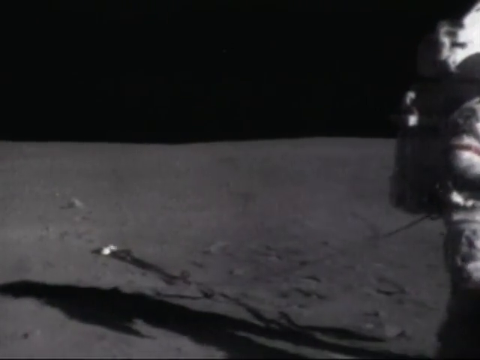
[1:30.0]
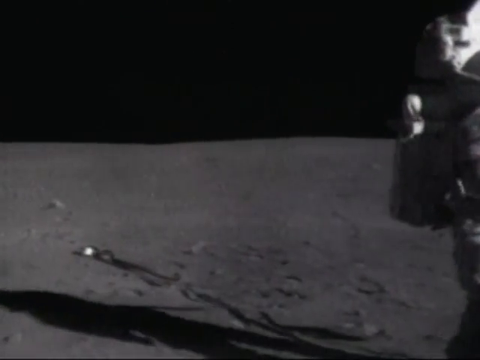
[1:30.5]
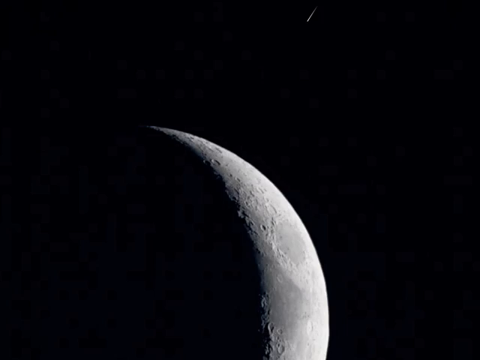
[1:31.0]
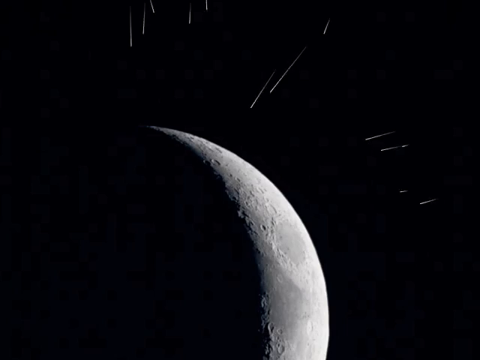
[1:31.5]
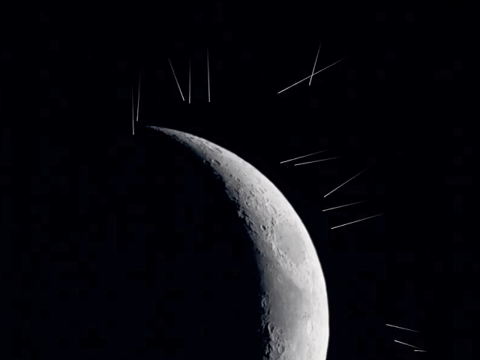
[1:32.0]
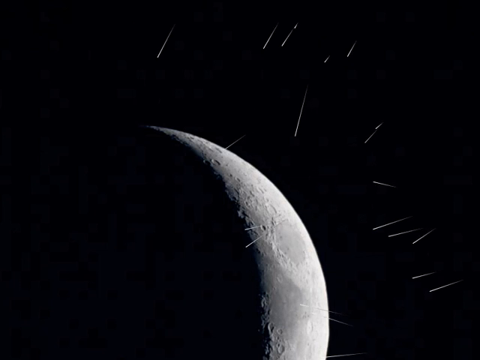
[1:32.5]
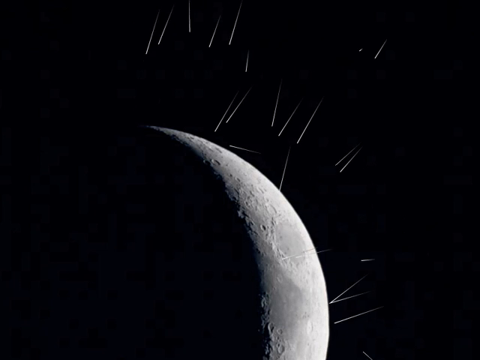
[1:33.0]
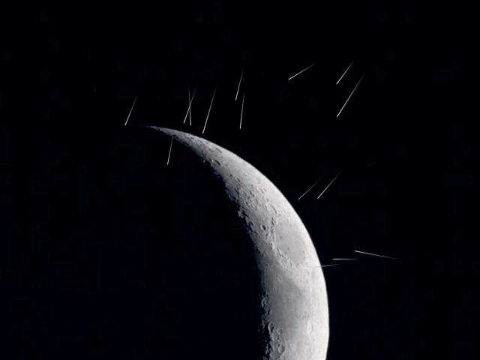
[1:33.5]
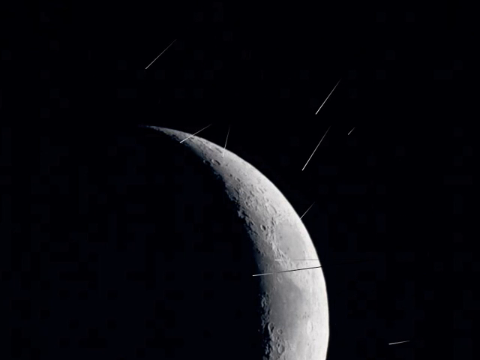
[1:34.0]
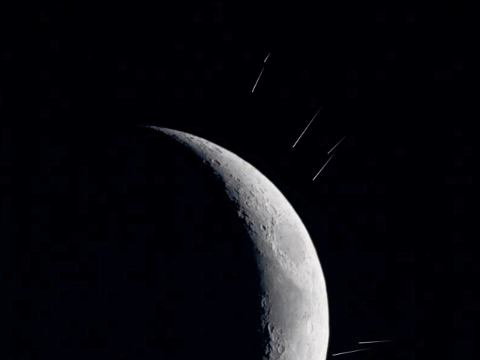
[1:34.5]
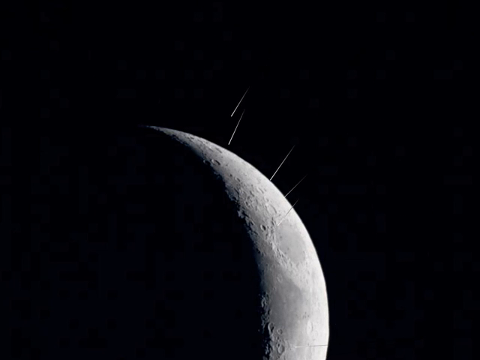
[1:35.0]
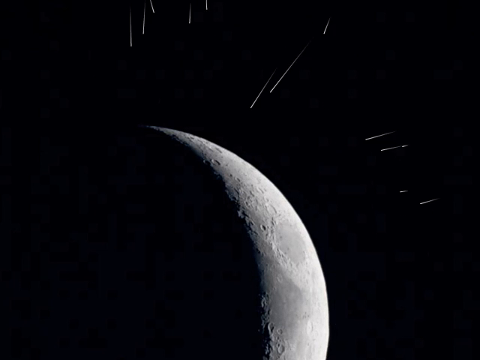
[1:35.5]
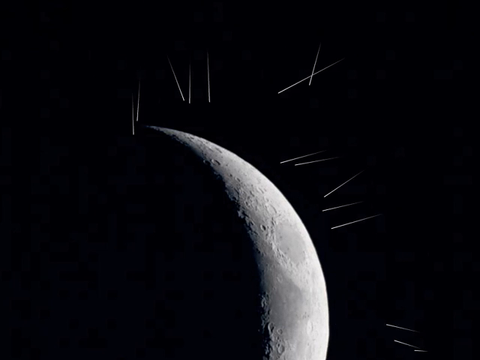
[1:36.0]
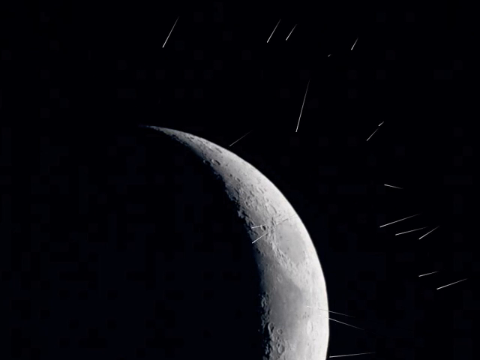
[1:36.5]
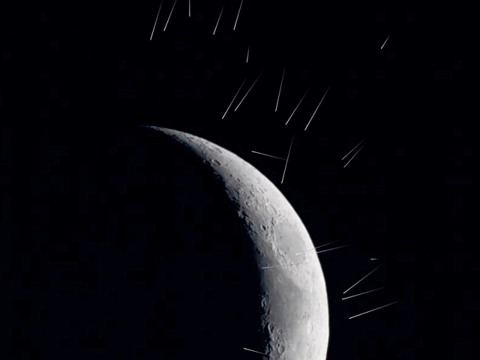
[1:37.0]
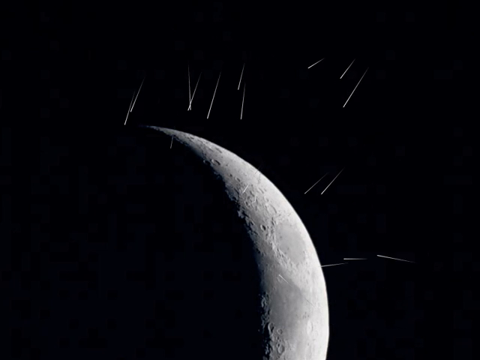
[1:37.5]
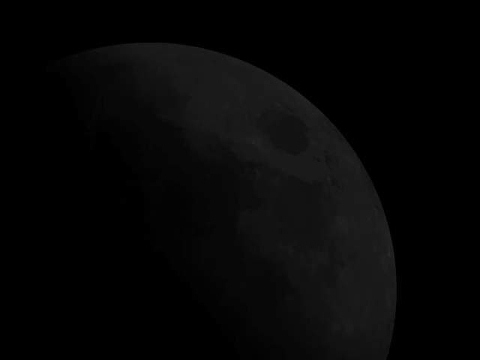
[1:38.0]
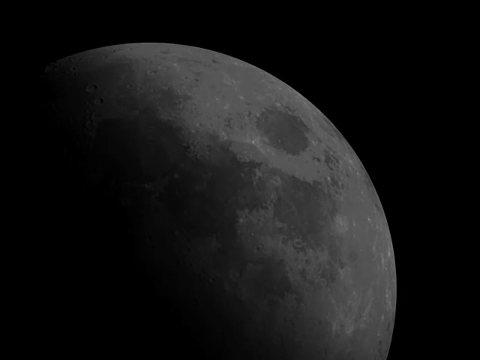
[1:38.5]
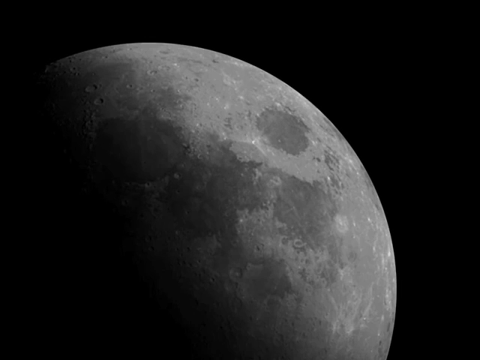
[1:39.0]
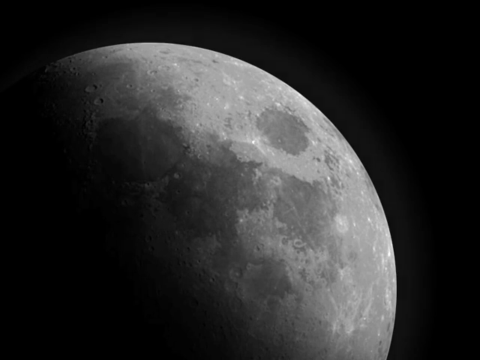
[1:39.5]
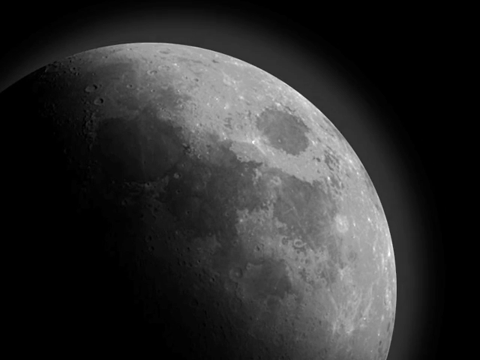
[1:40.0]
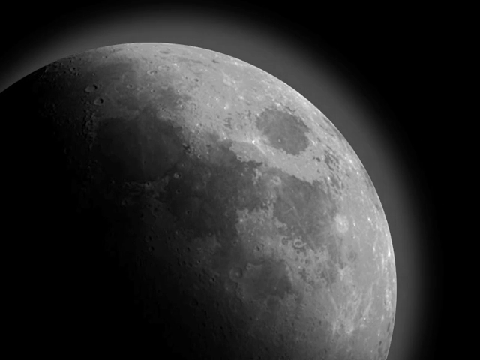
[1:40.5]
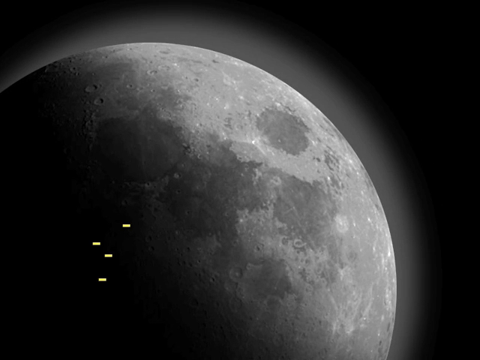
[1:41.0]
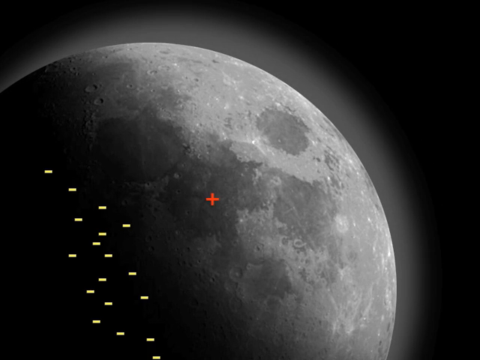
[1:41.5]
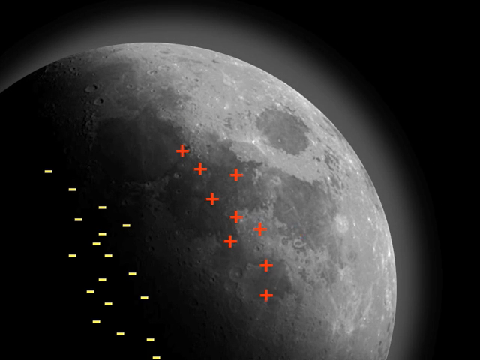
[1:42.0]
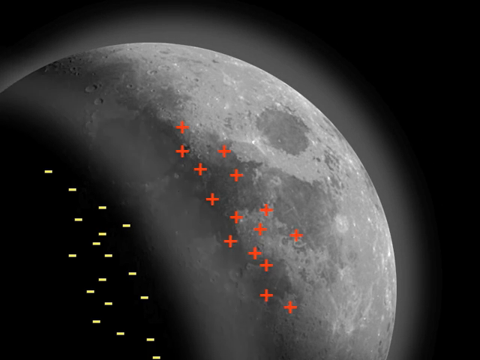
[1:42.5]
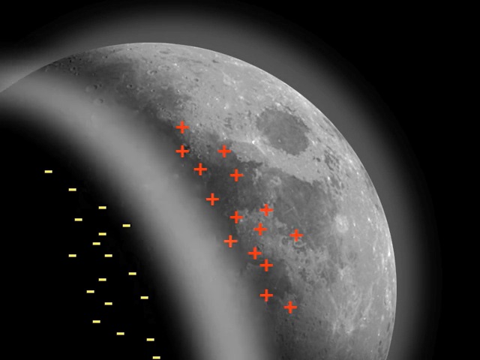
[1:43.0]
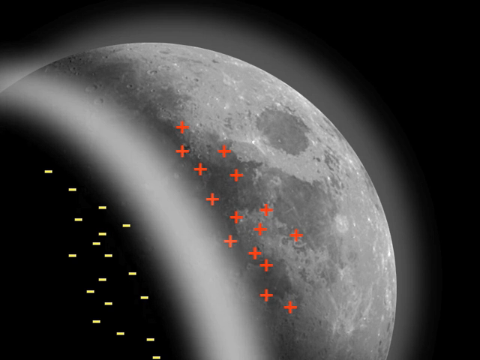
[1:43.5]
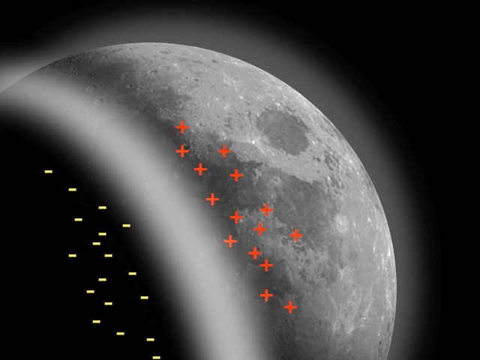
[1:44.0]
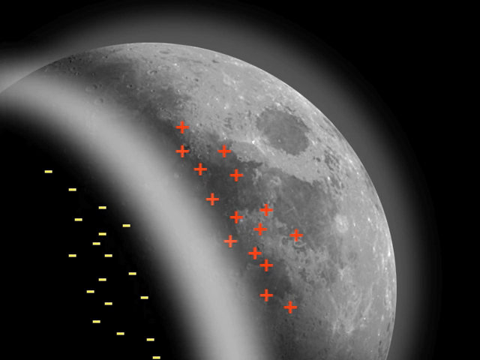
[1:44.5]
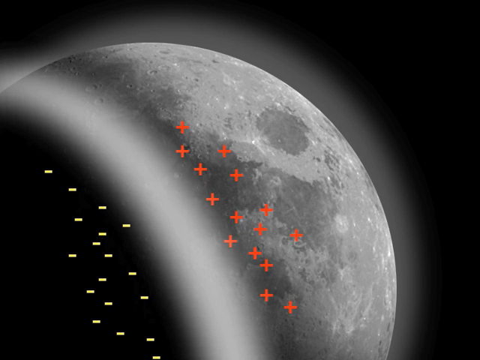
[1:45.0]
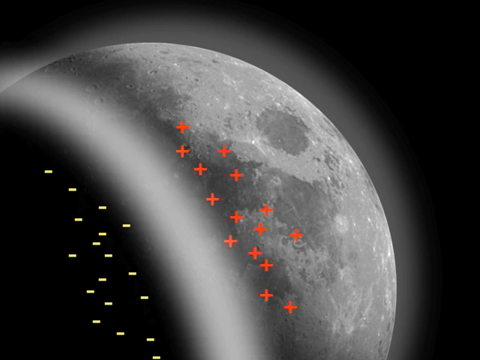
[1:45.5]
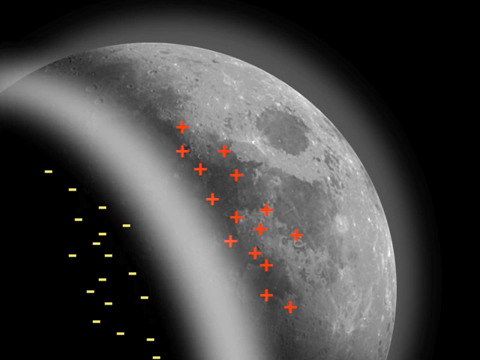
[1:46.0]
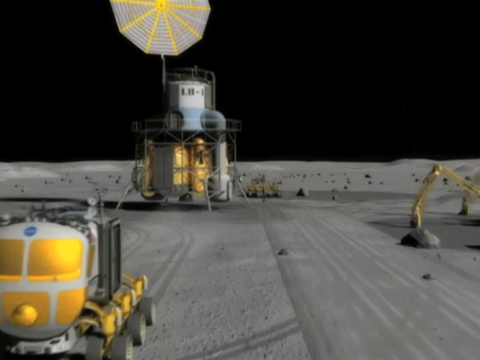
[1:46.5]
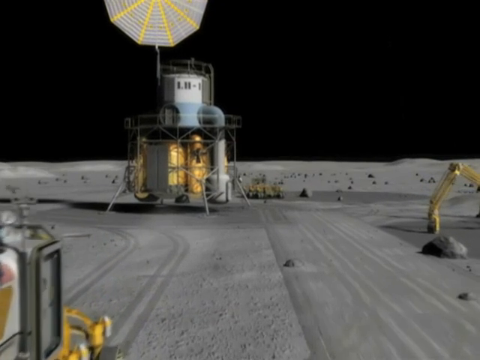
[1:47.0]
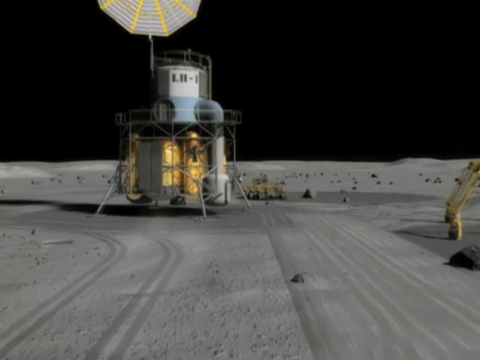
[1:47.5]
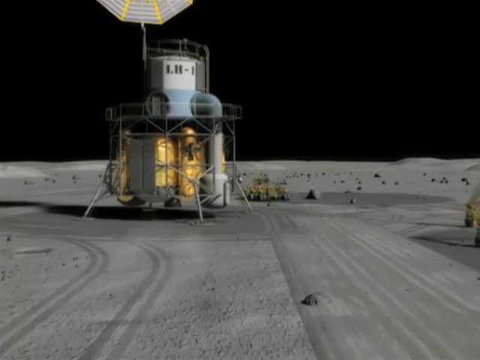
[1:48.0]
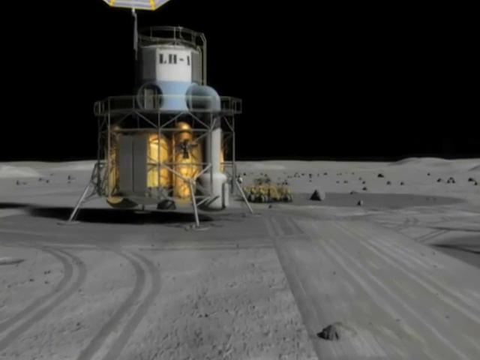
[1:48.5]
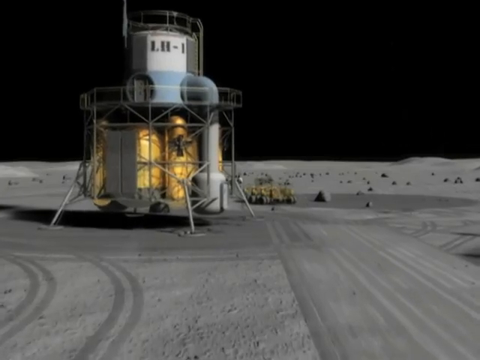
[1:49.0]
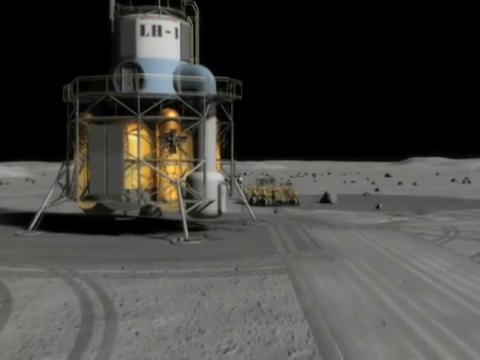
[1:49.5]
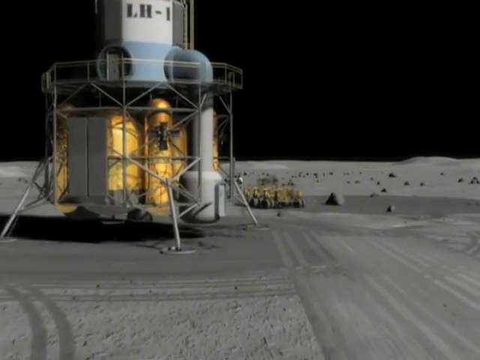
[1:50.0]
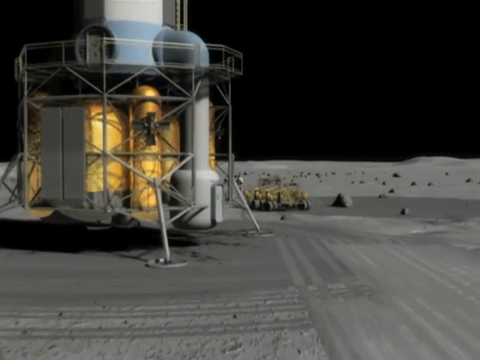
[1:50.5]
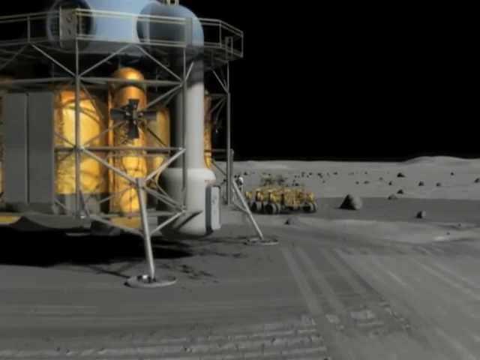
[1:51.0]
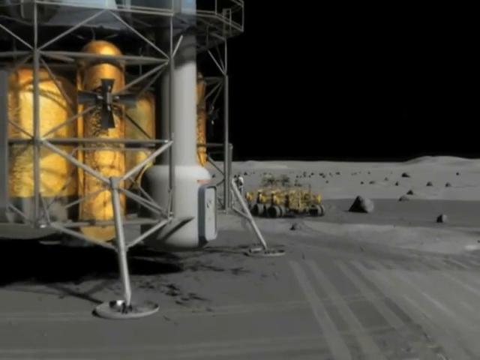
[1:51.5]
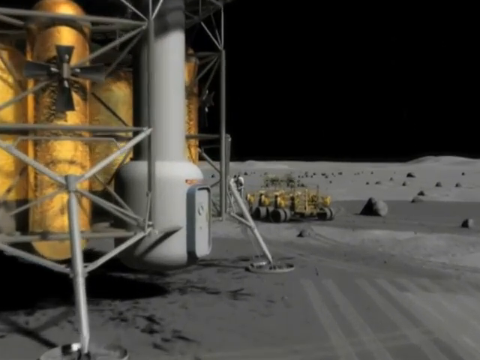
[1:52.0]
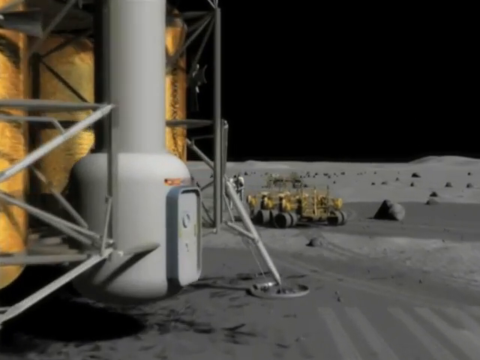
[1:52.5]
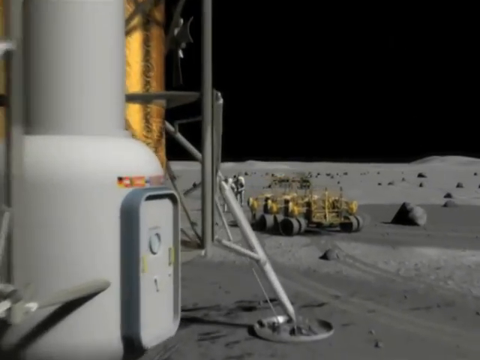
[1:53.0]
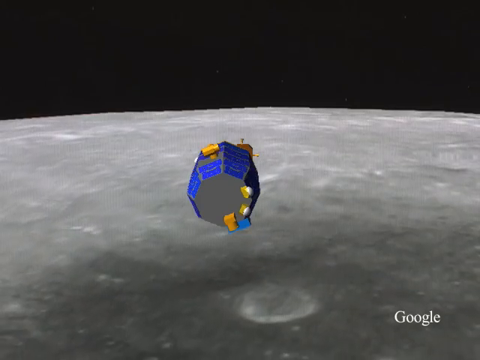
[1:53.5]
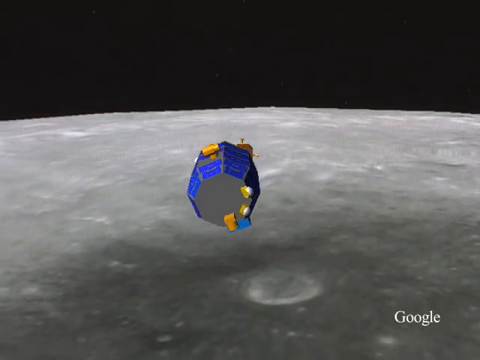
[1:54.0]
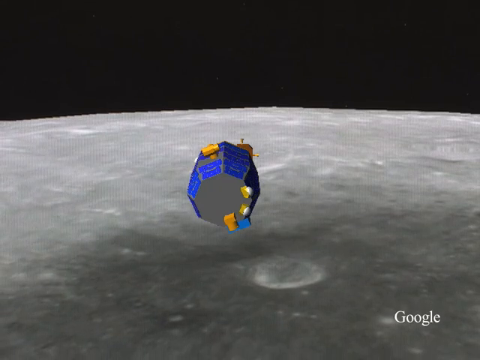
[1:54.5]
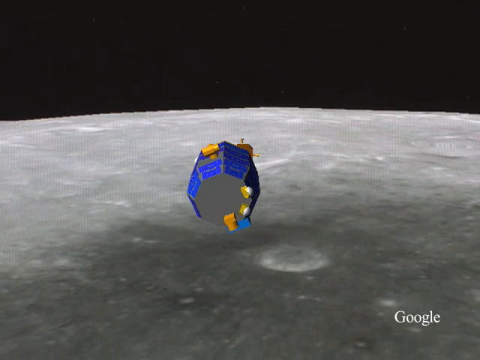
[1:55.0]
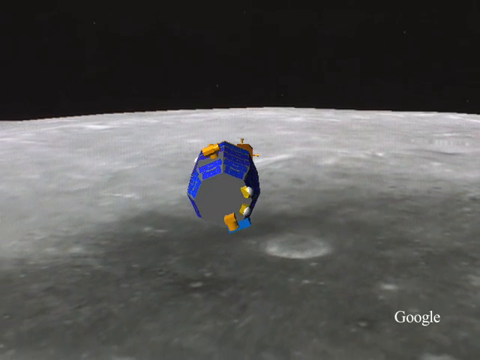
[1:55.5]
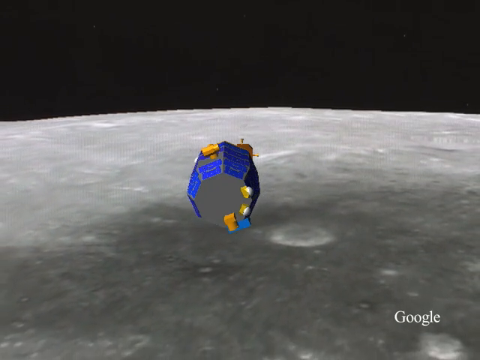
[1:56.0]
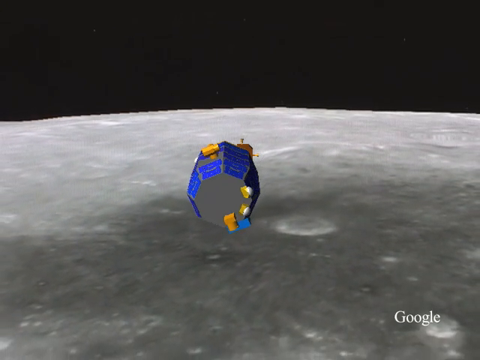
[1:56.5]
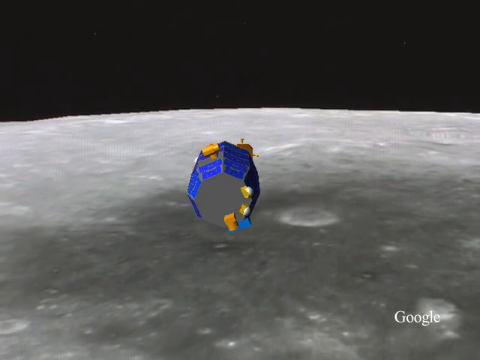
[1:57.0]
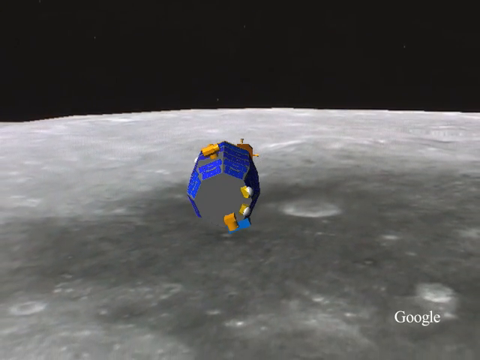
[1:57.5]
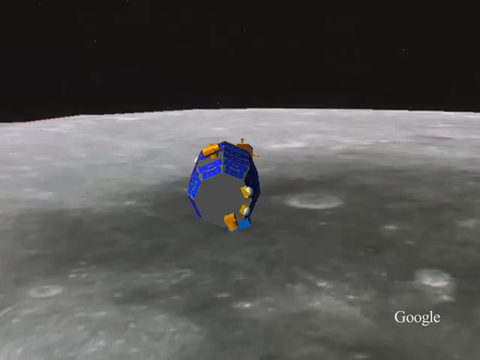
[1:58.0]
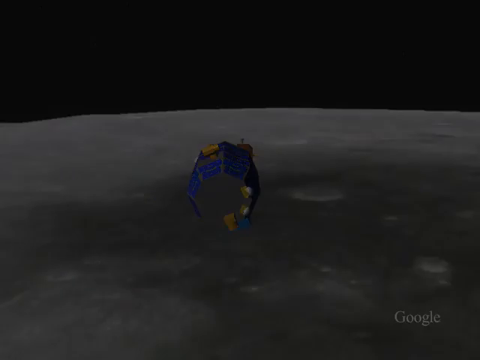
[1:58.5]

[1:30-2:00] The astronaut on the moon is still shown. The scene then switches to a view of the moon from off its surface, with half of the moon covered in darkness and half in light. What look like shooting stars, hundreds of them, are all around, though they do not look real. Another view of the moon follows: little red plus signs come in over the light side of the moon, and on the darker side there are little yellow minus signs. A big, thick line of light appears between the plus signs and the minus signs. Then there is some kind of setup in space where a bunch of equipment is visible, and finally a view of the spaceship traveling over the moon.